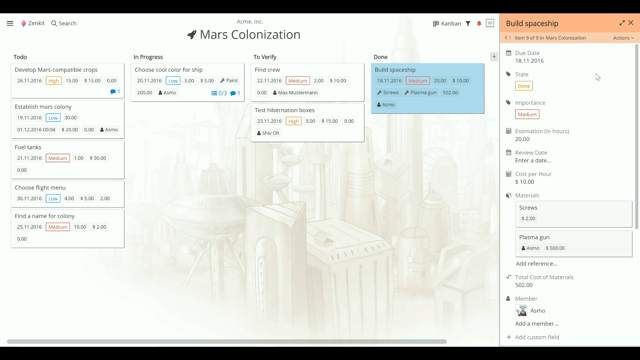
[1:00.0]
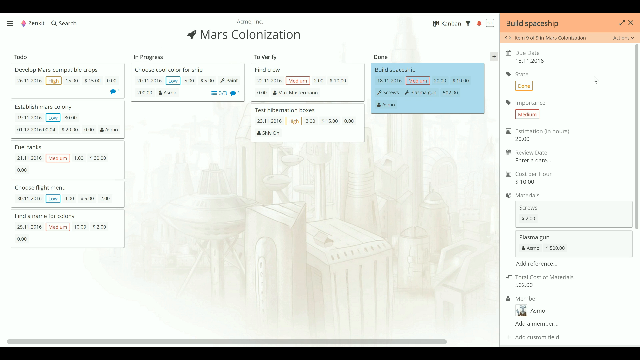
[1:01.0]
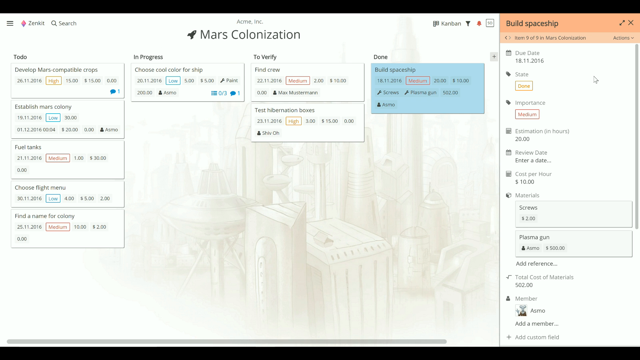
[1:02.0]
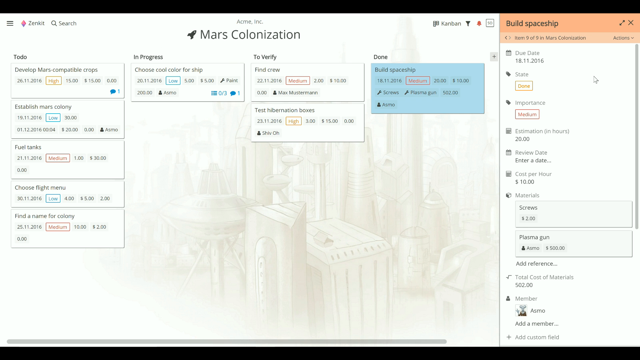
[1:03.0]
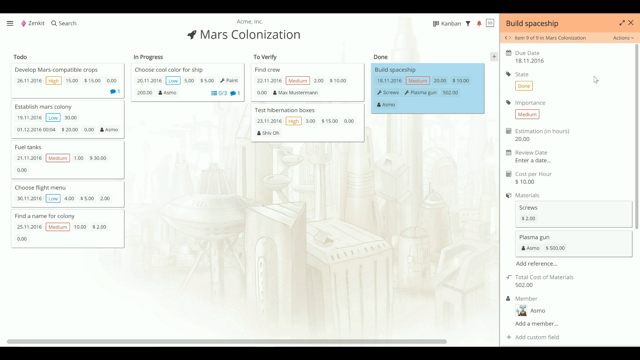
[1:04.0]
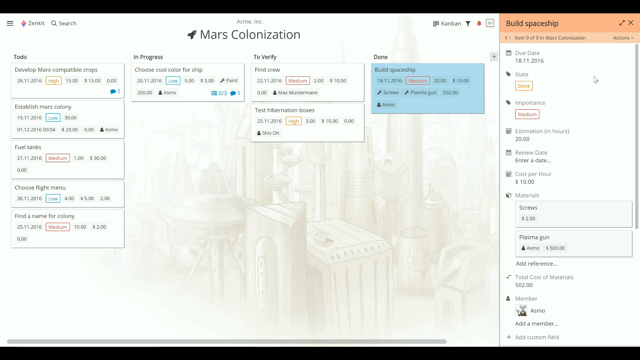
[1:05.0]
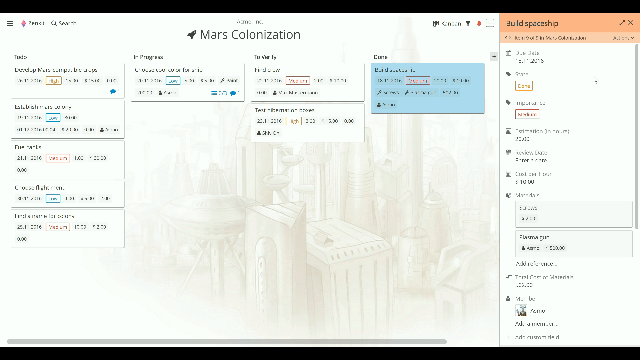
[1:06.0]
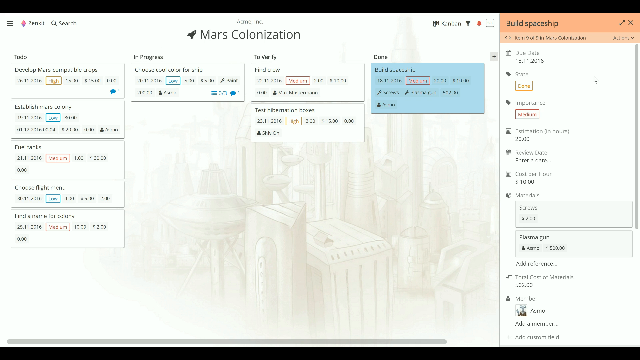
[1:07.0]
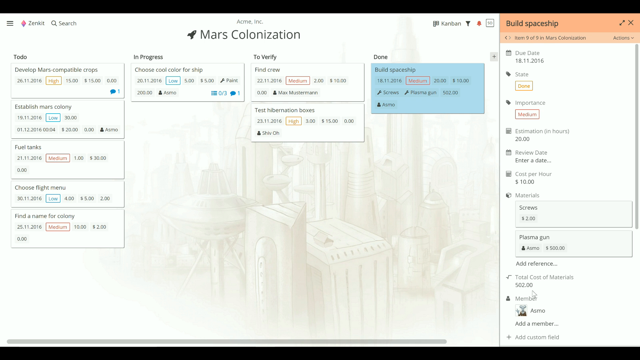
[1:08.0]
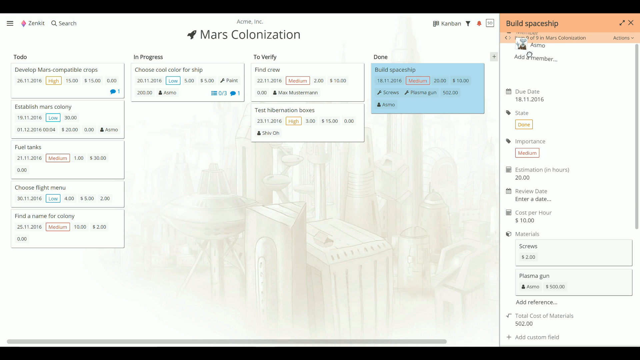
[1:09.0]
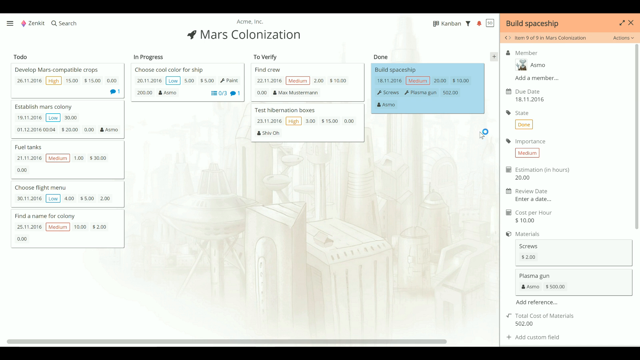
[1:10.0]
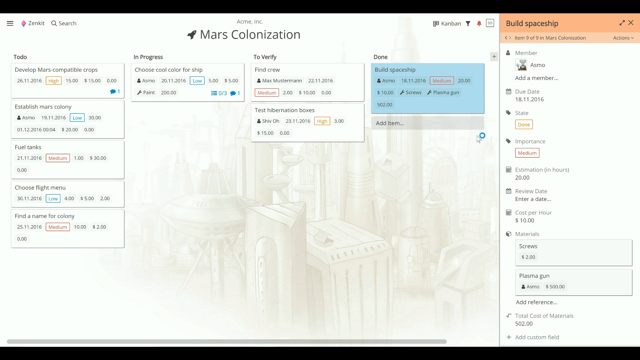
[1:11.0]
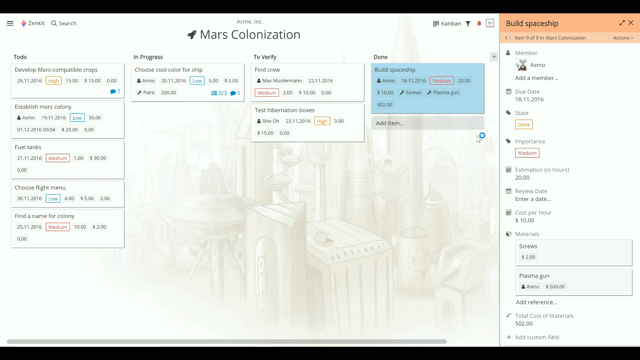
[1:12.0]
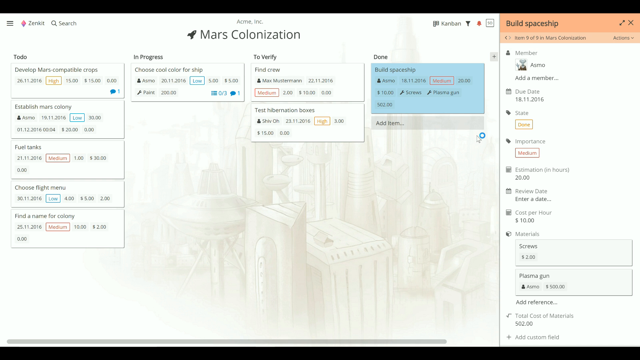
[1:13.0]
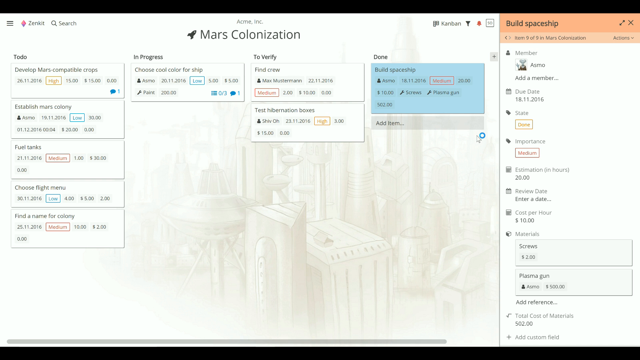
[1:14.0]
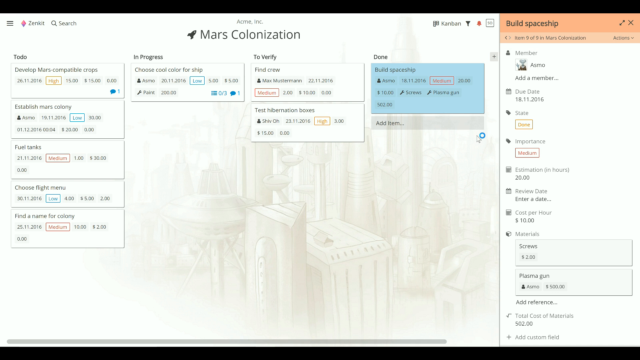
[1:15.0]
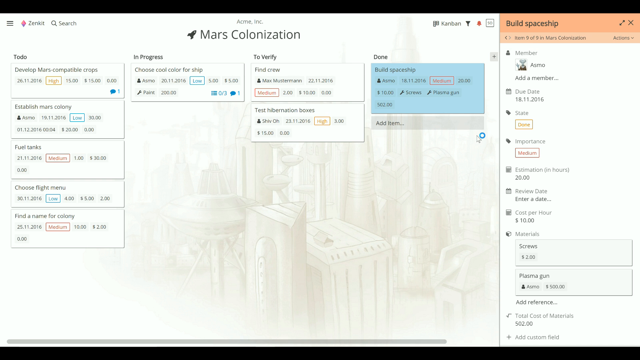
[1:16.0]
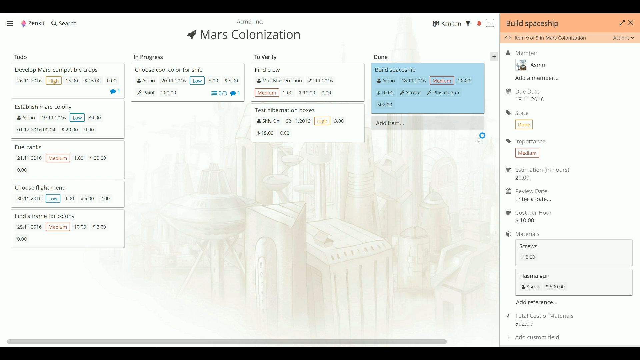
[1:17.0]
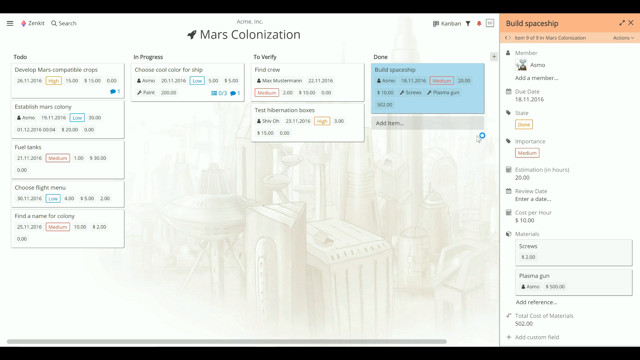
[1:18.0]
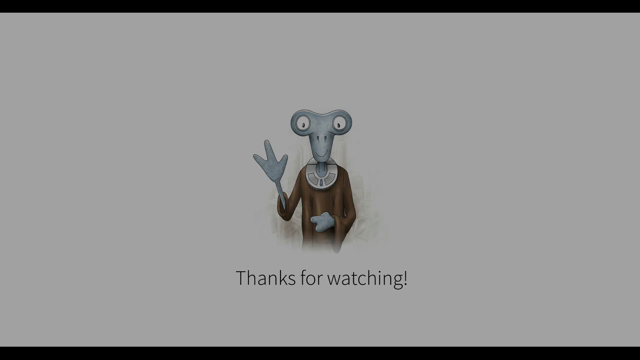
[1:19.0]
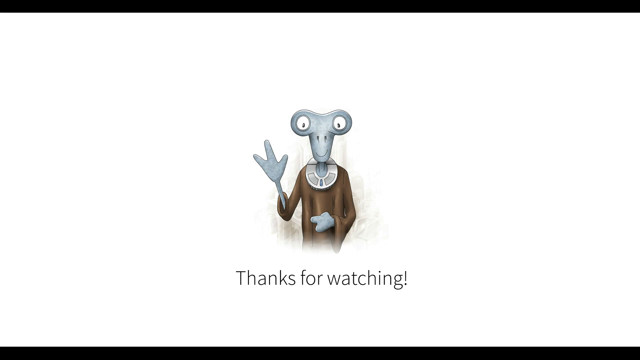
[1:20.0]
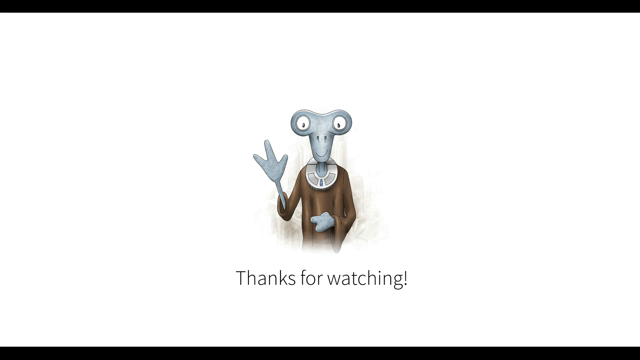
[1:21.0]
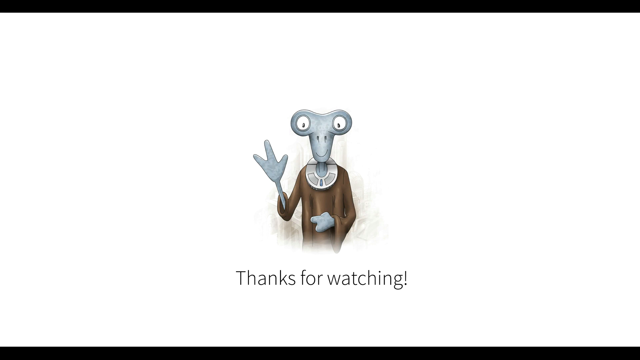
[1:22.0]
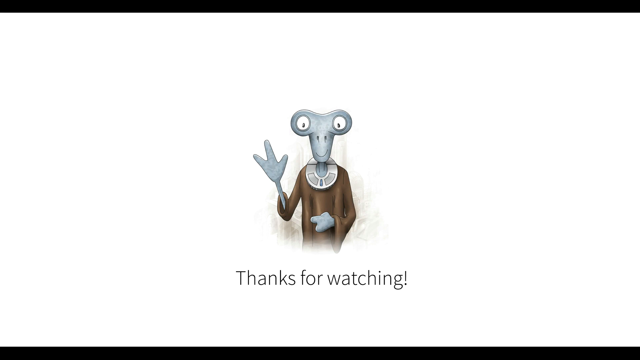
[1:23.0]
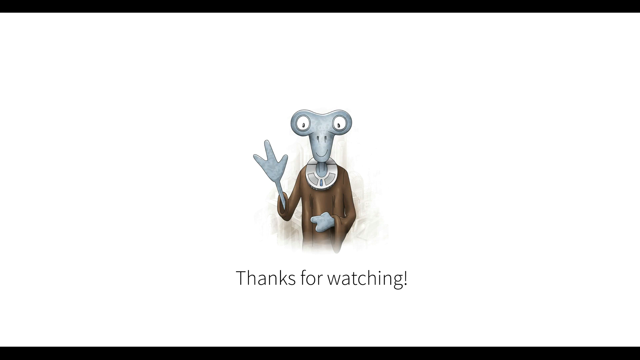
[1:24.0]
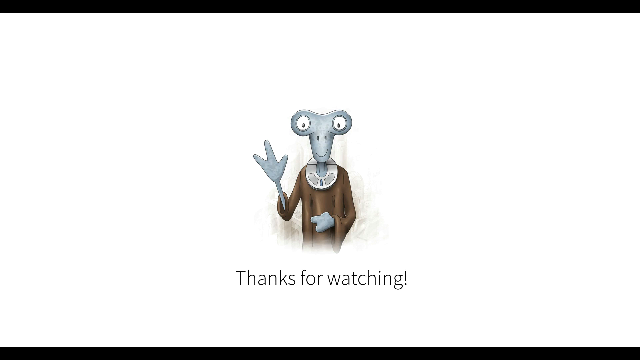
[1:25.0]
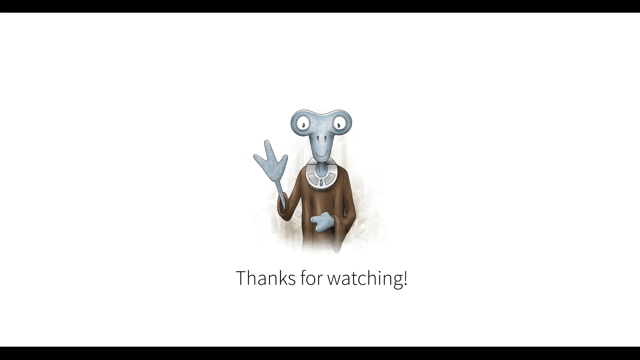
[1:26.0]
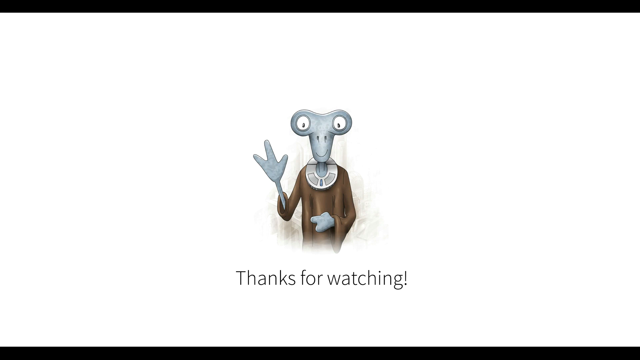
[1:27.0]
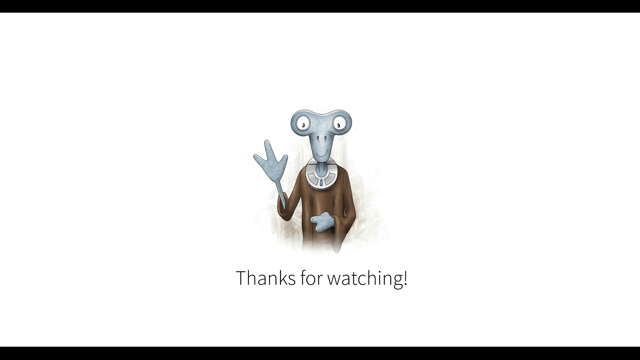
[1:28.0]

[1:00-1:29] An options screen on a computer is shown. It is predominantly white, with a large white section taking up the majority of the screen and a standalone white column on the right that has an orange rectangle at the top with the black words "Build spaceship" inside it and options underneath. The large section on the left has a very faint illustration of a futuristic cityscape, and the black text at the top of this section says "Mars Colonization". There are four columns: "To do", "In progress", "To verify" and "Done". Under the fourth column is an option for build spaceship, coloured blue, while all the boxes in the other columns are white. The cursor moves in the far right build spaceship column, where a materials section has been expanded, showing screws at $2 and plasma gun ammo at $500. An item in the build spaceship column is highlighted and seemingly pulled across into the main section before the screen fades to black. It fades back into a white screen with an alien in the centre, shown from its waist up to the top of its head. The alien is gray with large white eyes and is smiling. It wears a brown tunic with some sort of metal decorative collar around its neck. Its left hand is held in front of its stomach, and its right hand is held up towards the viewer with three fingers in some sort of salute. Underneath the alien, black text says "Thanks for watching!" The image holds for several seconds.